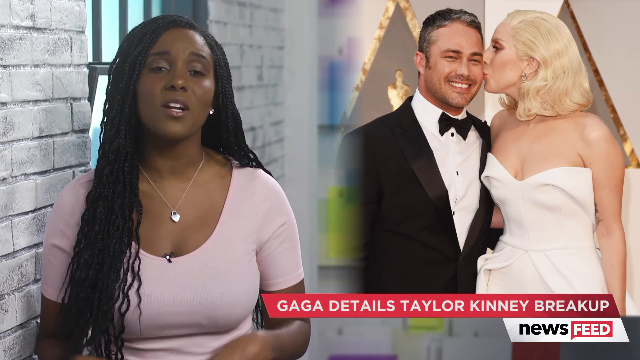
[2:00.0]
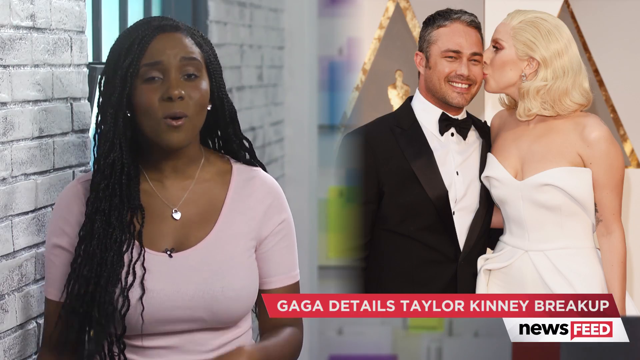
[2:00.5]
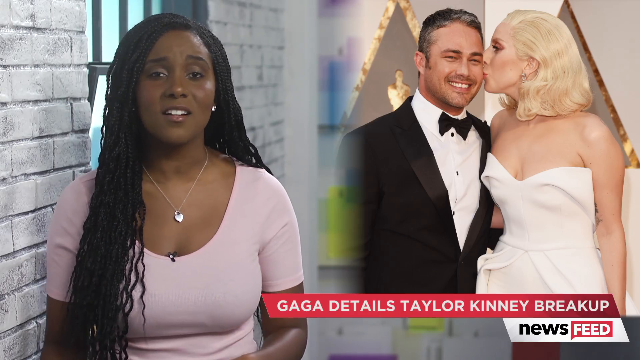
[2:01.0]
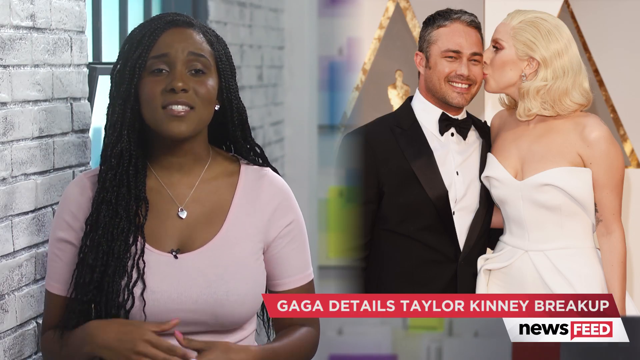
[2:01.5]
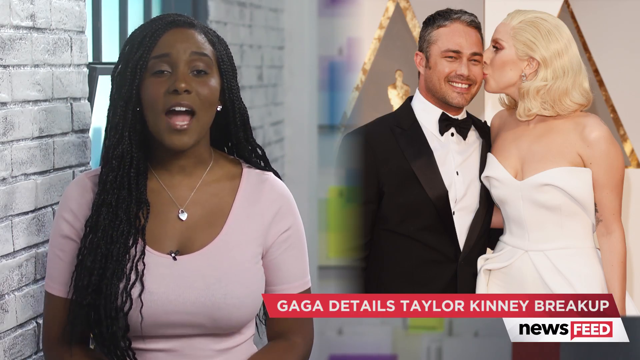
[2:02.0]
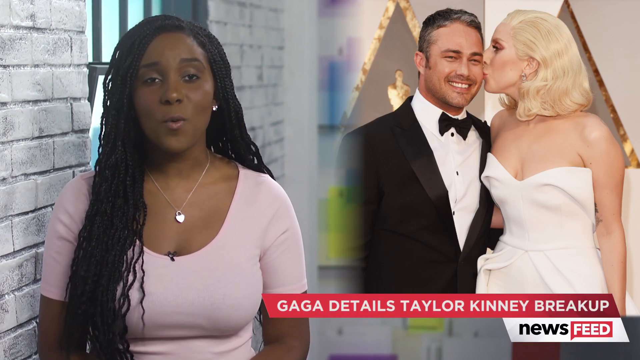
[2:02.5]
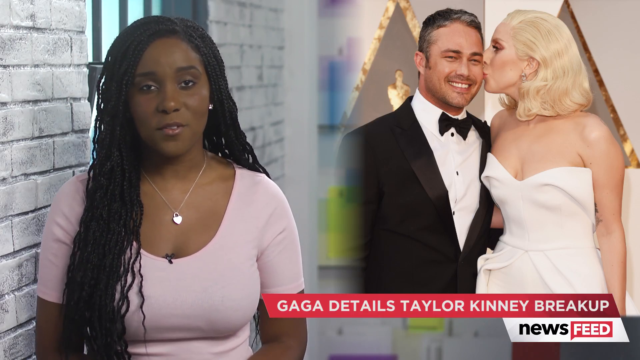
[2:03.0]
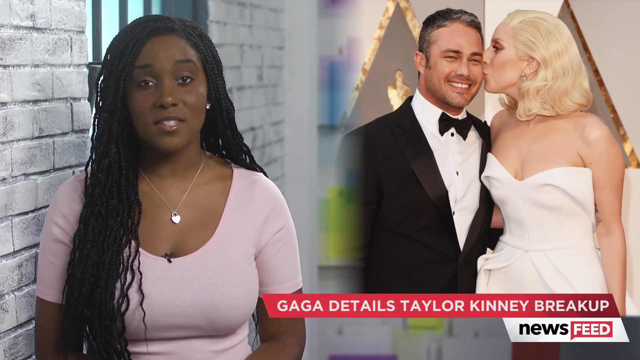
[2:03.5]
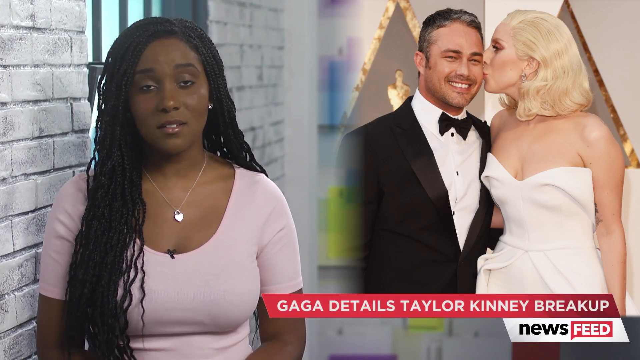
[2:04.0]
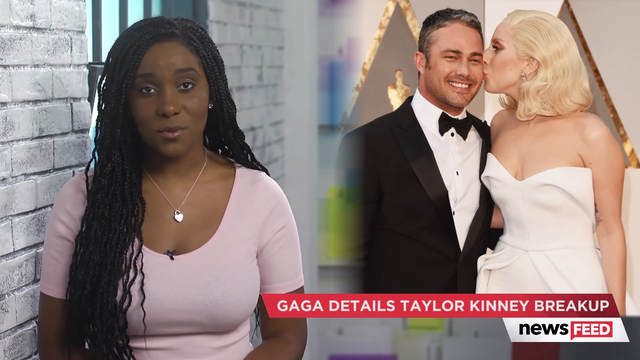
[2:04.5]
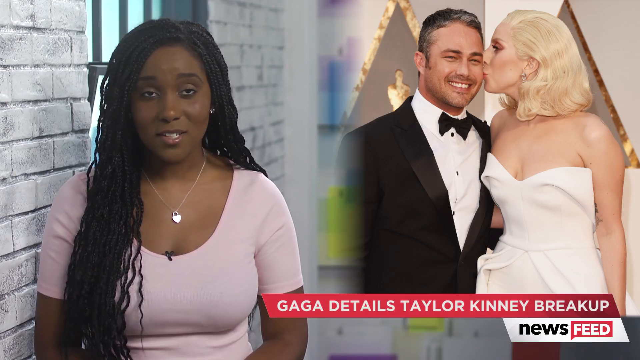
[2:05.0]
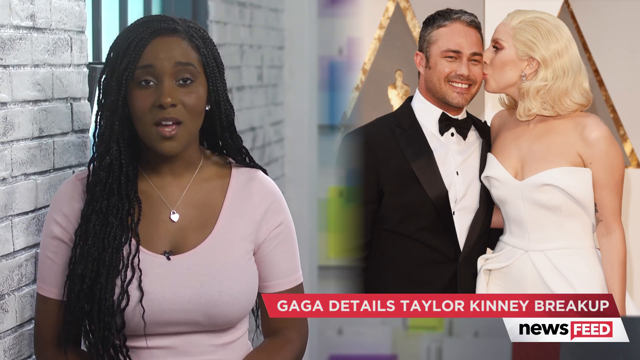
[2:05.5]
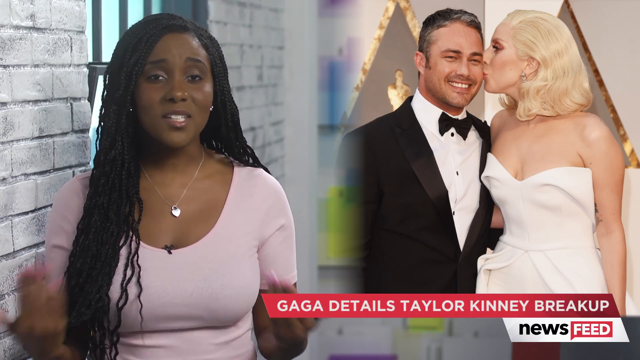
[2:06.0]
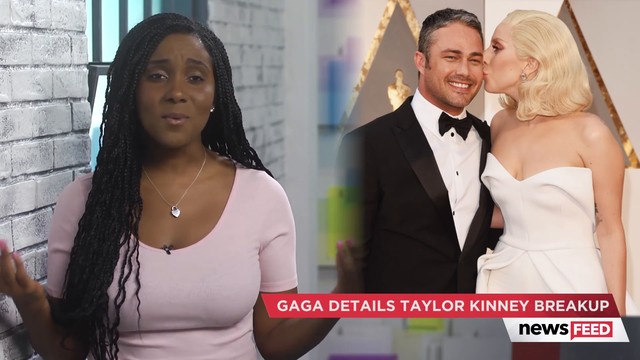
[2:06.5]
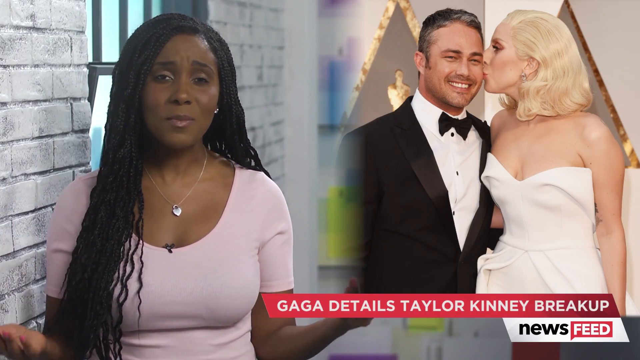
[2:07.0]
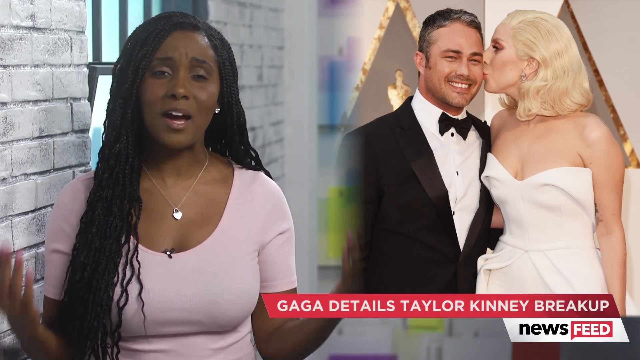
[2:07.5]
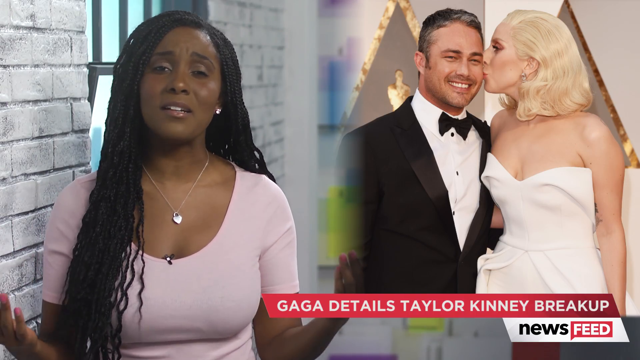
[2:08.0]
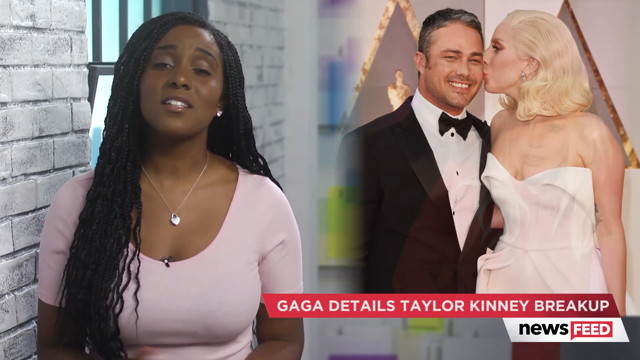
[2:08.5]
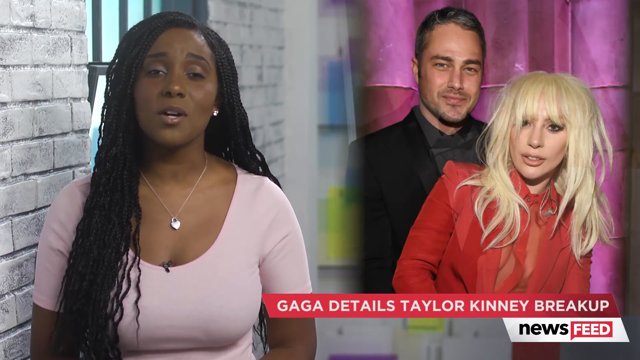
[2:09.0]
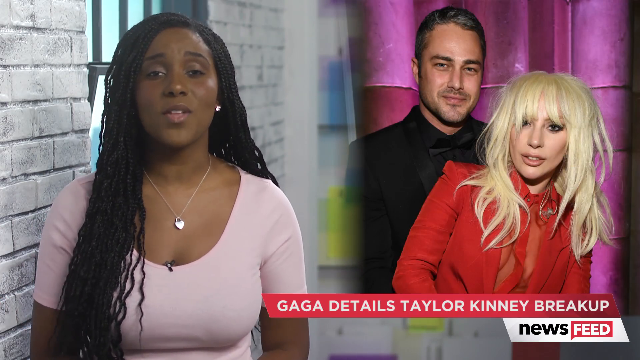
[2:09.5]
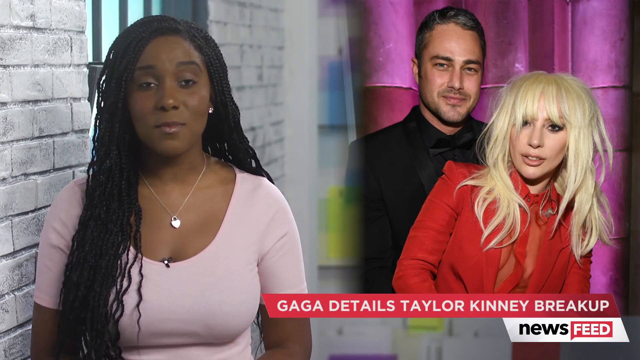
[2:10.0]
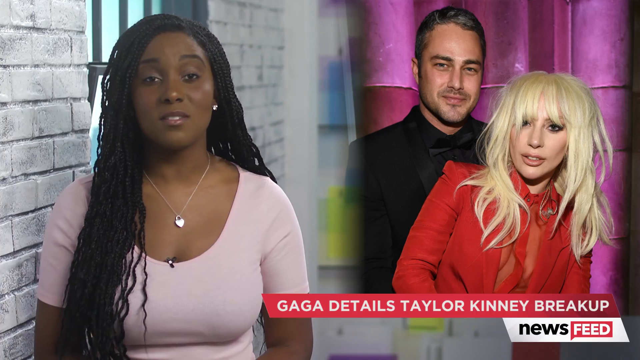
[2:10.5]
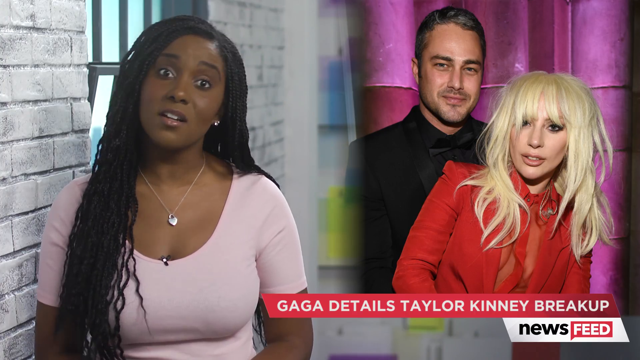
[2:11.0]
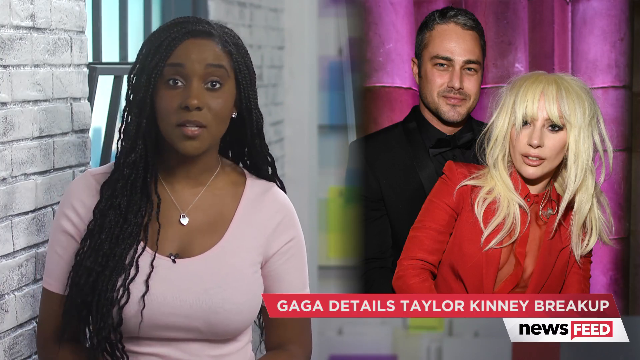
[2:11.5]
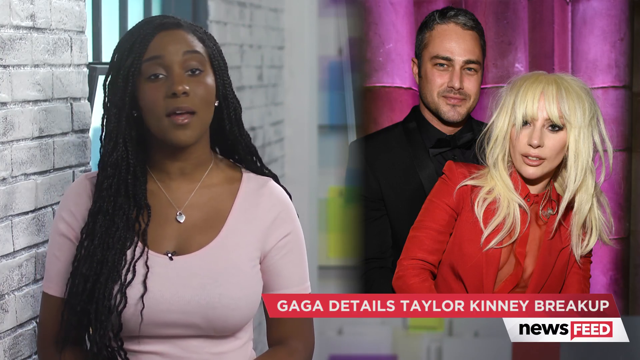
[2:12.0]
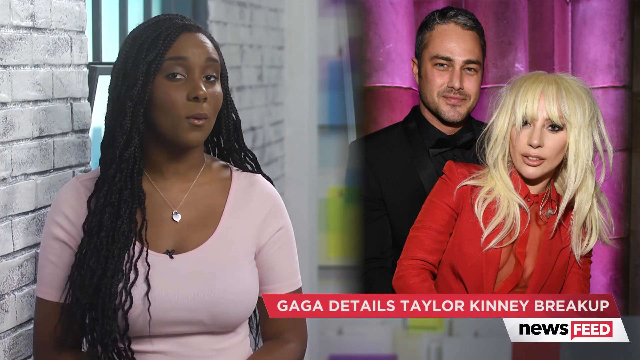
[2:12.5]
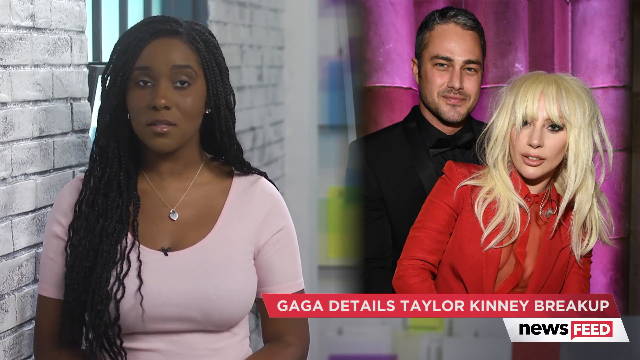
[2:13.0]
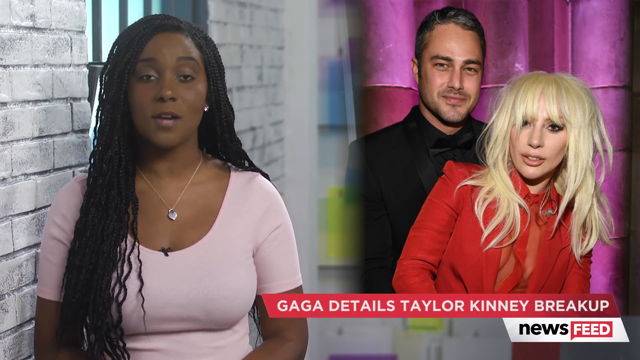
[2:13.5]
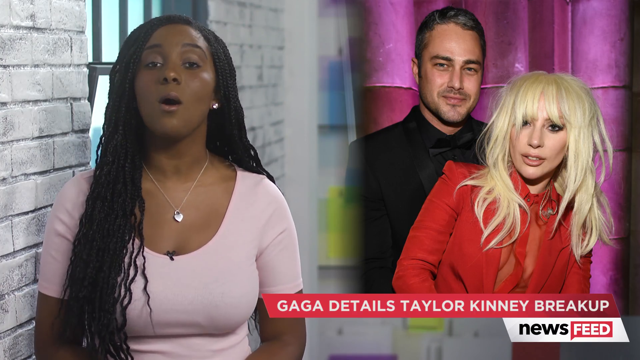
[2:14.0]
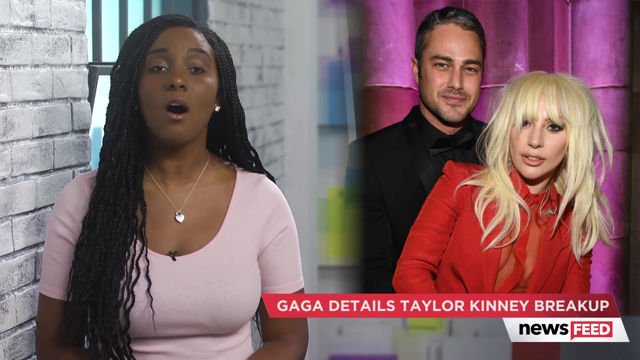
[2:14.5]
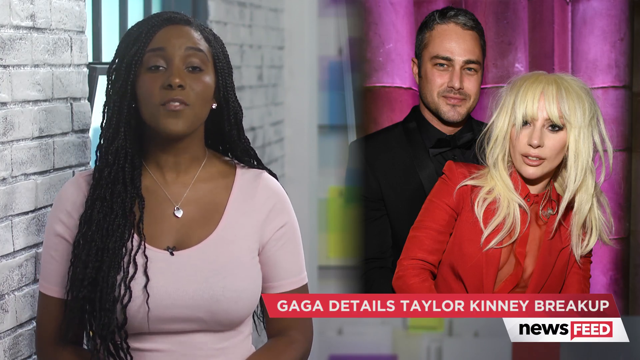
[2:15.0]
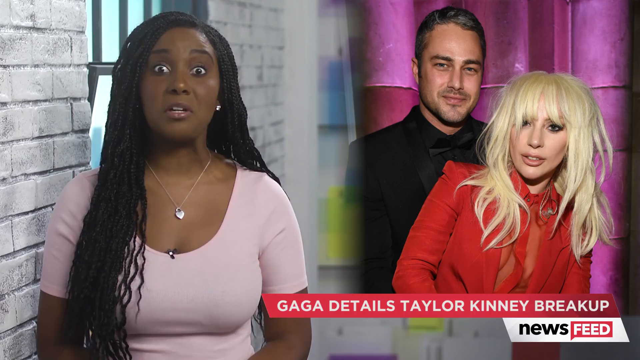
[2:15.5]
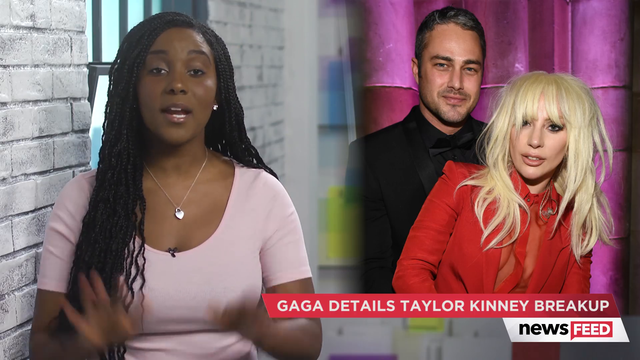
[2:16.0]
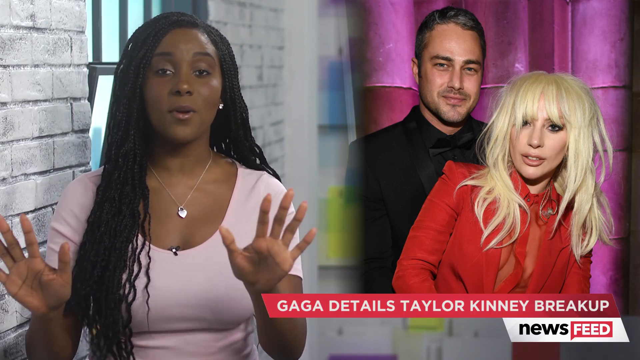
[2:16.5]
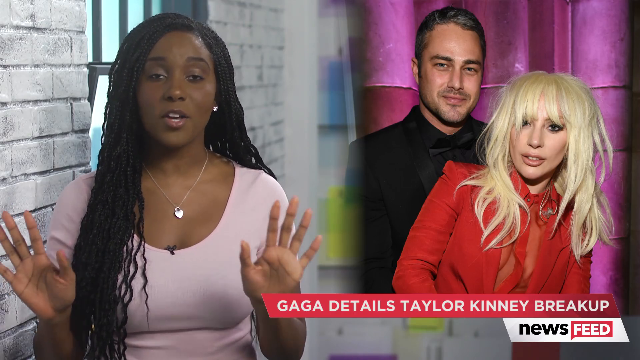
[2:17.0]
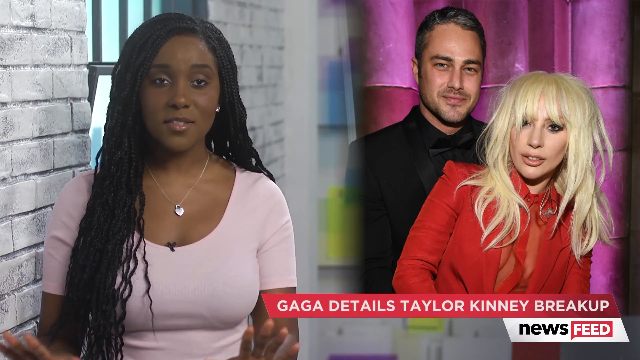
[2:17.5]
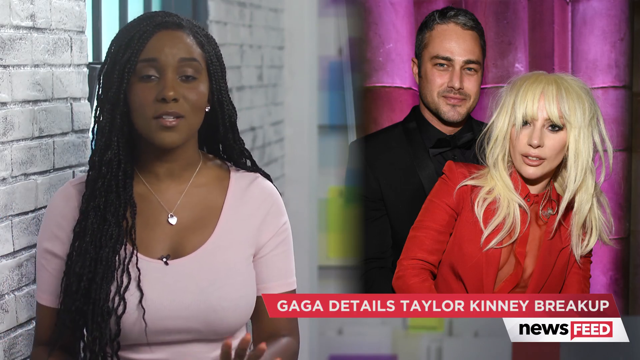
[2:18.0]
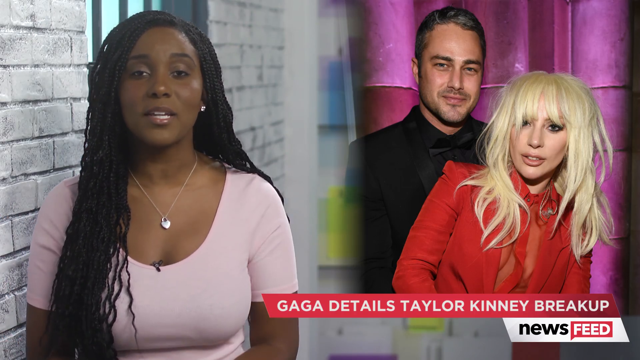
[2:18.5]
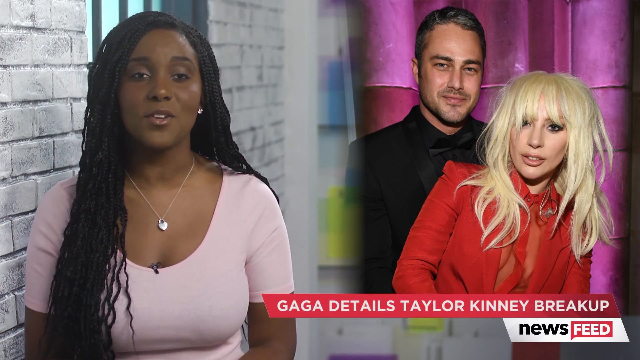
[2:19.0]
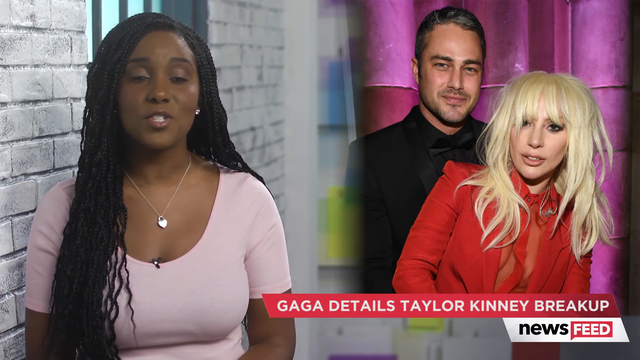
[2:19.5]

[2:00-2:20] The hostess of the news segment speaks to the camera. She wears a pink top and has very long, black, braided hair, and her necklace has a heart-shaped lock pendant. To her left is a white brick wall, and behind her is a window with black bars. To her right is an image of Lady Gaga with her ex-partner: Lady Gaga stands on the right side, kissing her partner on the cheek, and he wears a black suit, a white shirt, and a black bow tie. A red banner at the bottom of the image says "Gaga Details Taylor Kinney Breakup".